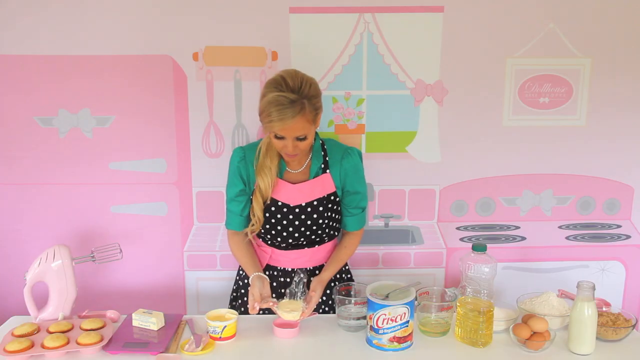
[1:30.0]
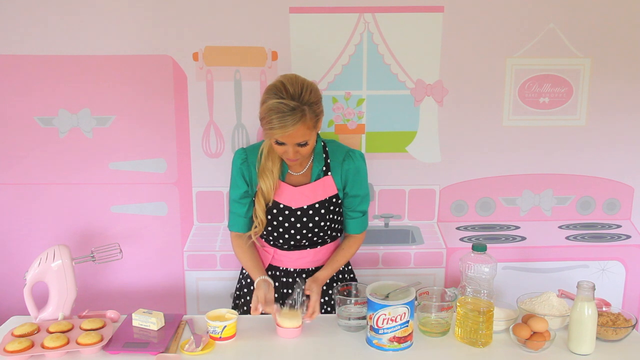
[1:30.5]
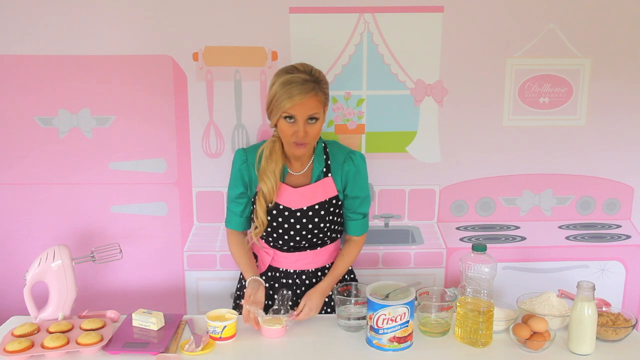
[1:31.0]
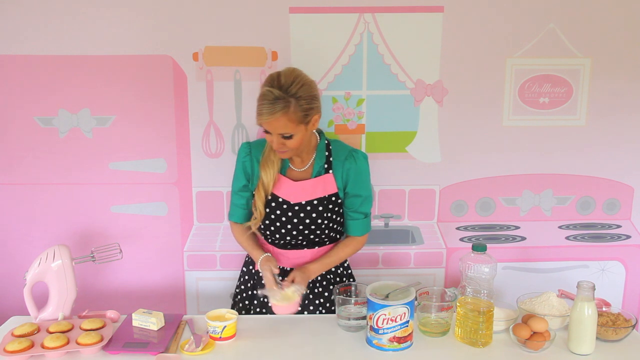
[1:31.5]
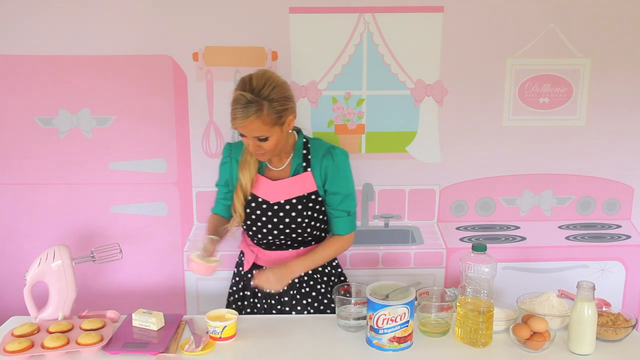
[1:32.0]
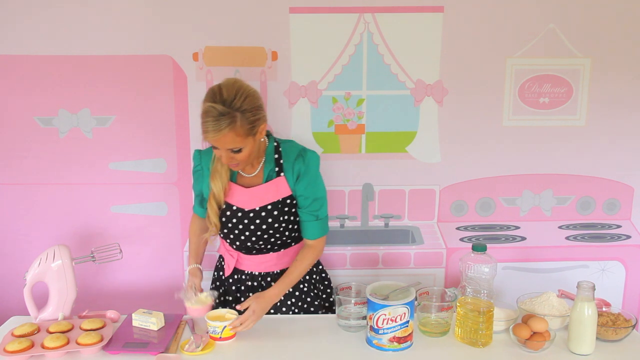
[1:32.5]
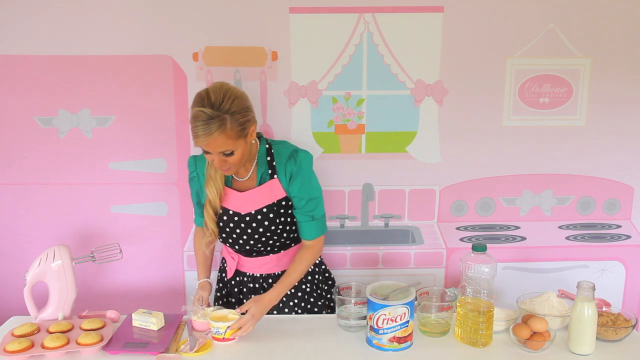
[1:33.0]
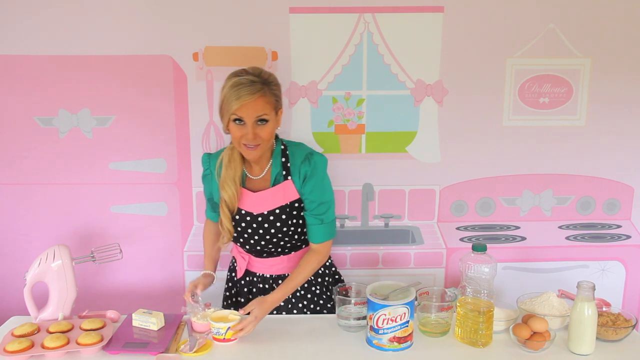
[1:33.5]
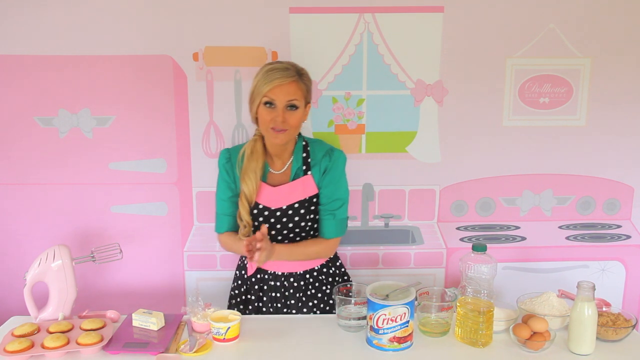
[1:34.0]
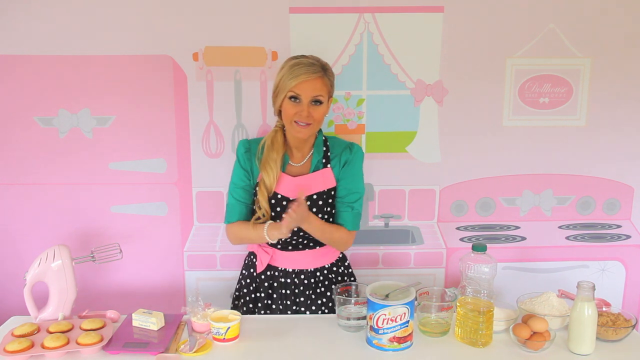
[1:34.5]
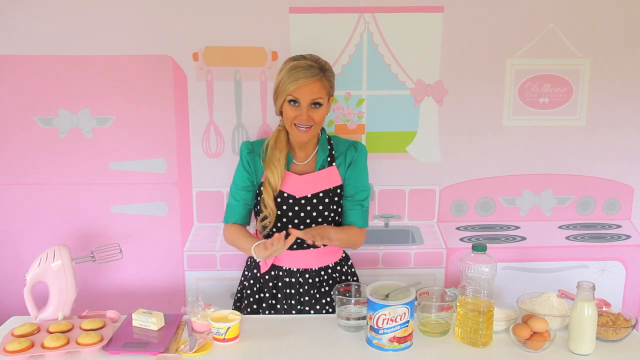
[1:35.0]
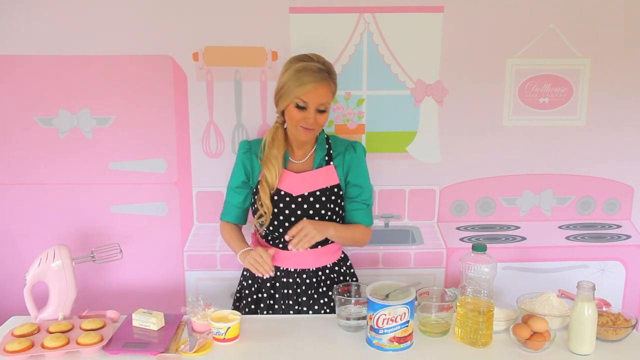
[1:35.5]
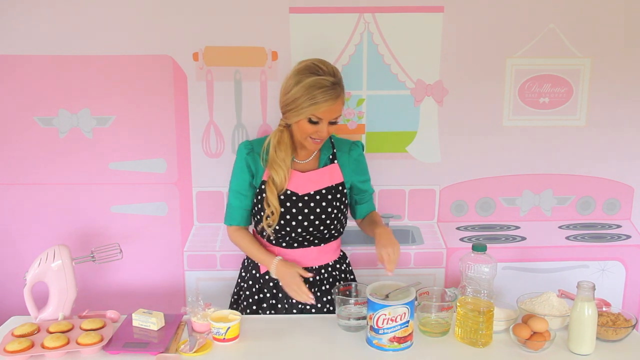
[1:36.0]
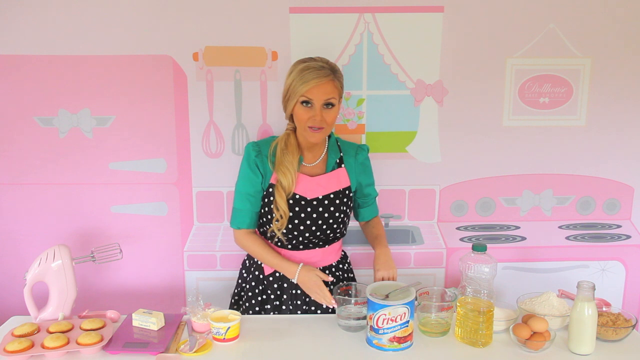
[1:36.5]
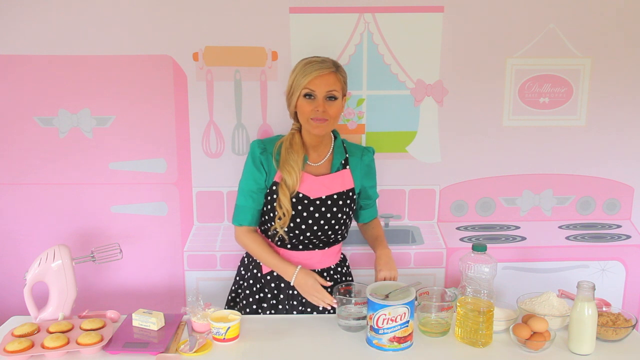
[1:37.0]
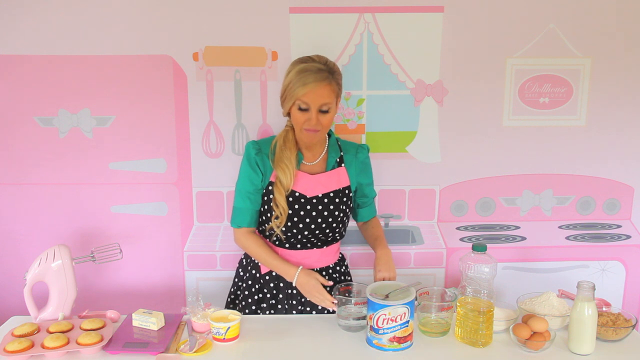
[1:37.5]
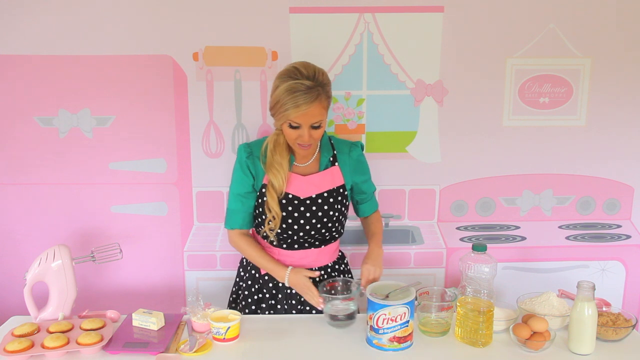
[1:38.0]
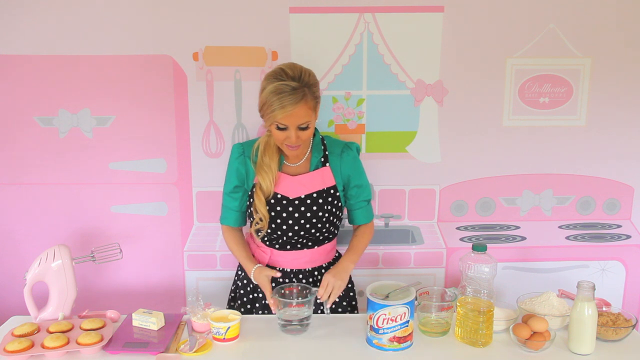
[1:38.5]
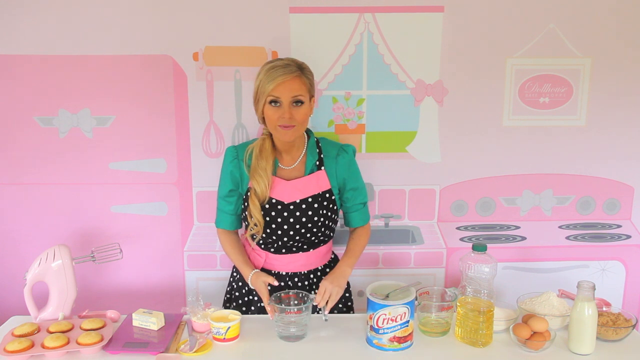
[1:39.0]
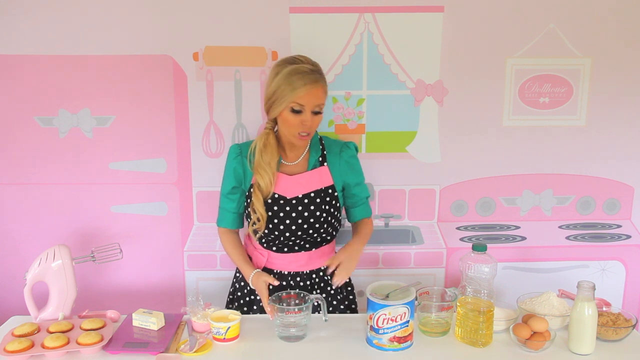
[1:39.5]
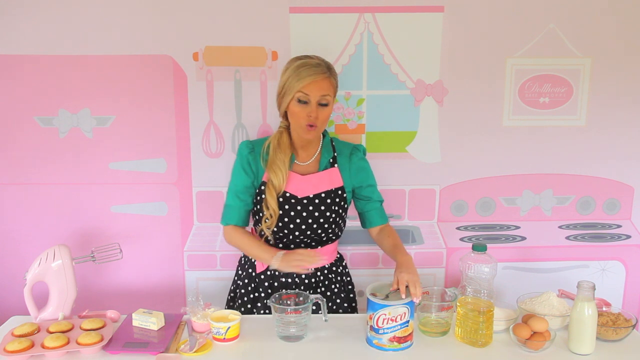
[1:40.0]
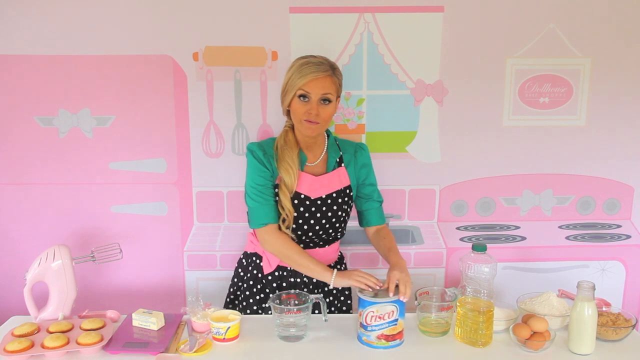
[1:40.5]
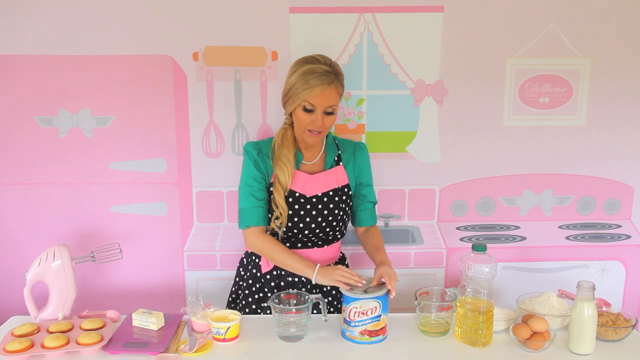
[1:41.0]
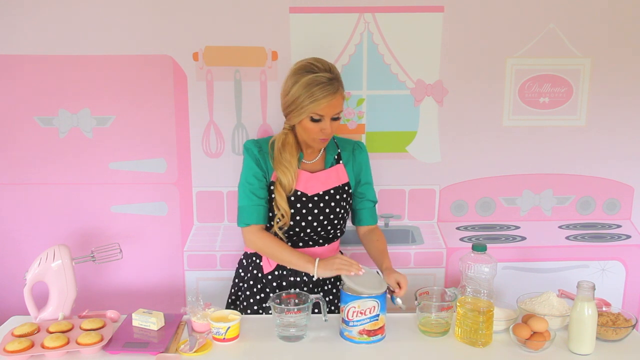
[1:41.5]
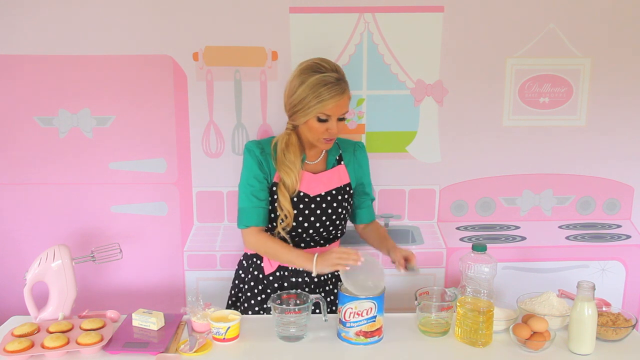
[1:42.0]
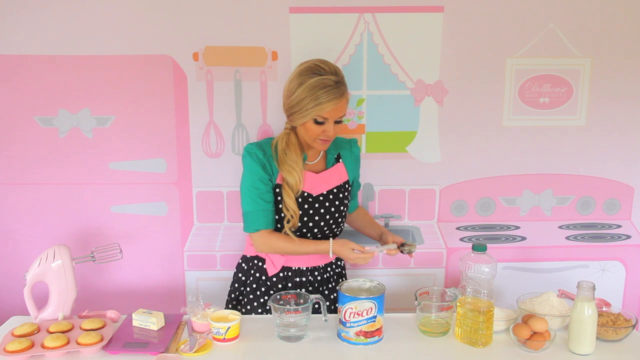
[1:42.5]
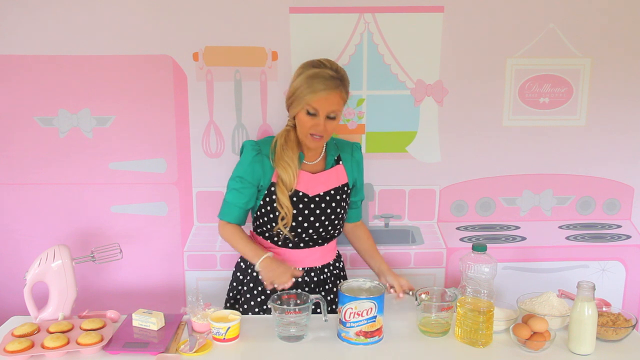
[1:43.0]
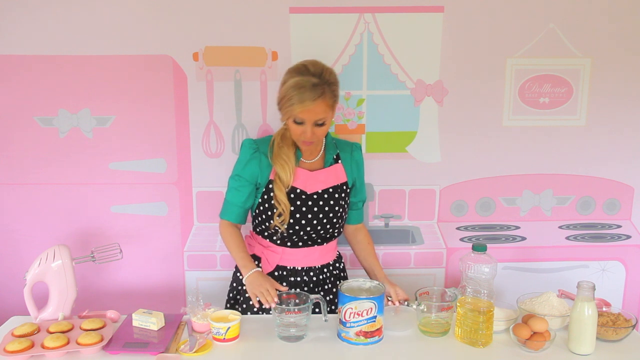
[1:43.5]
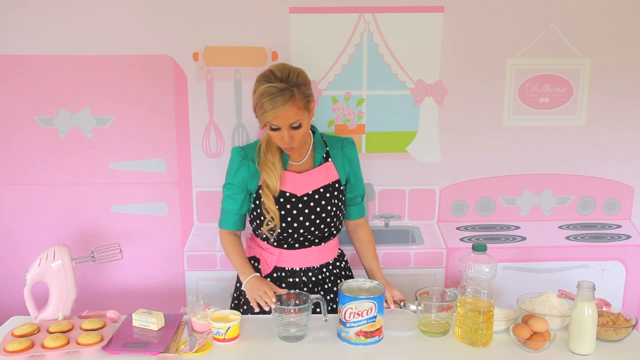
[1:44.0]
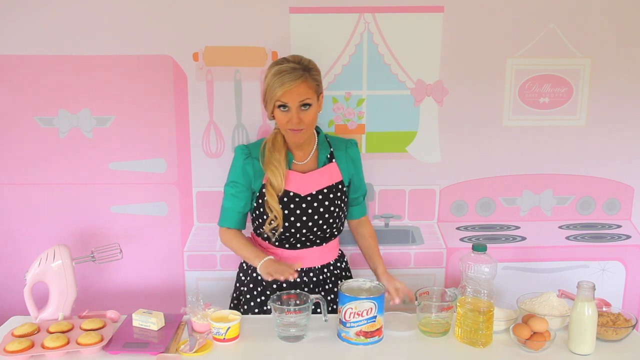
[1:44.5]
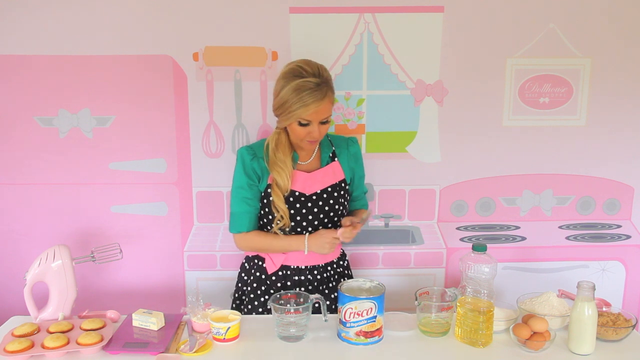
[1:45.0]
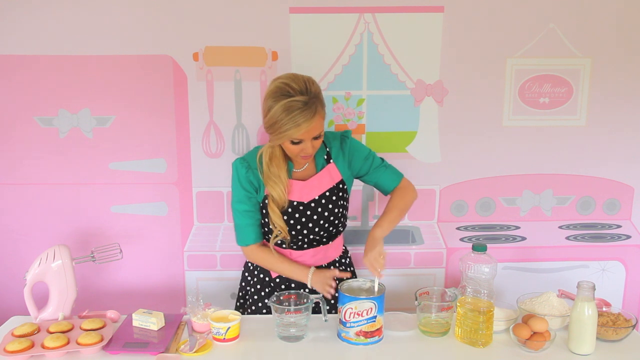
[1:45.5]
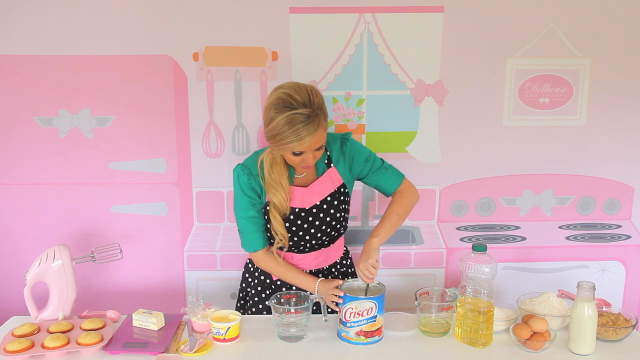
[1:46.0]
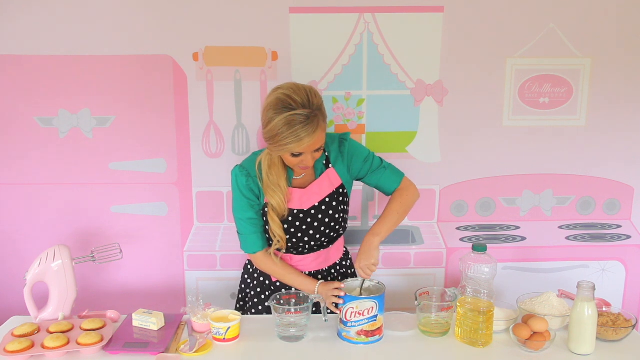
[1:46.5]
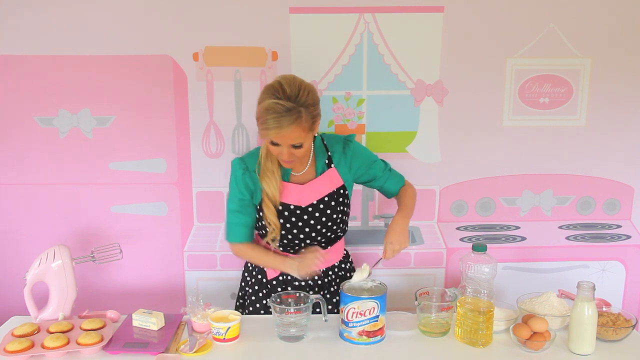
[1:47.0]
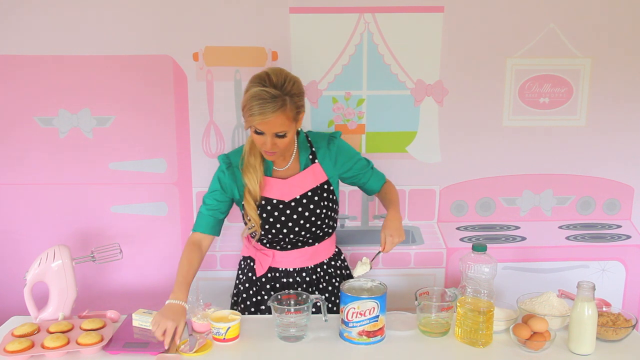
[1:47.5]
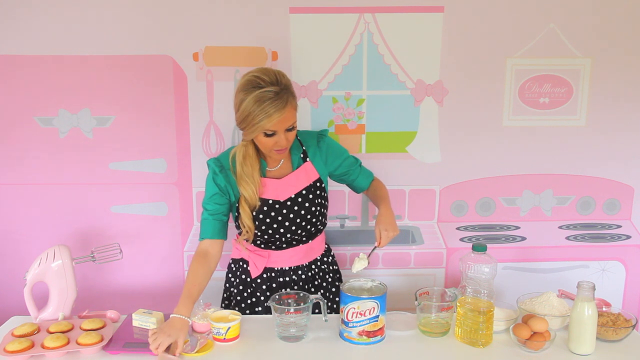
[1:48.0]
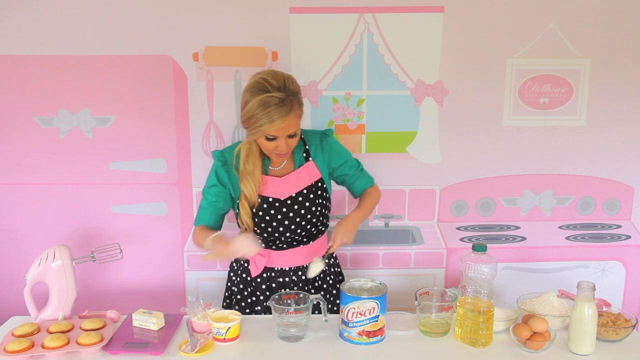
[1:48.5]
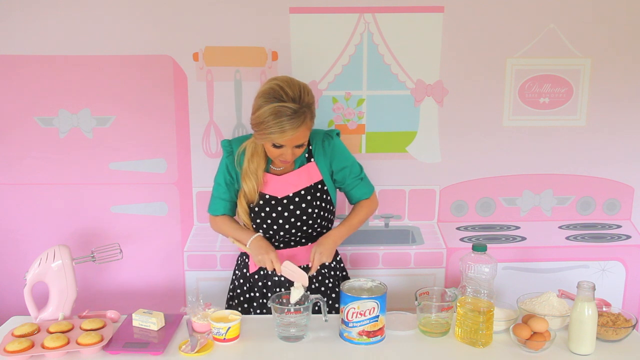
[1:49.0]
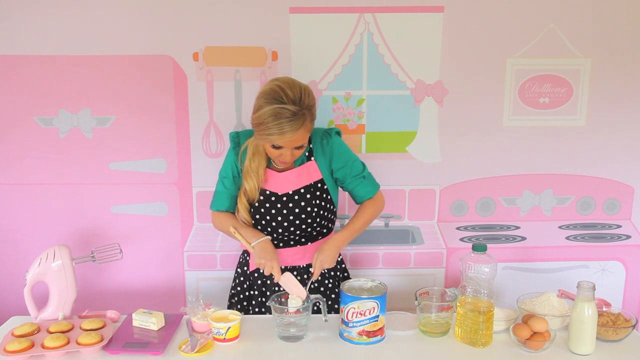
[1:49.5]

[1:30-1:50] She fiddles with the butter and places it next to the yellow container. She then drags the glass water jug from her right-hand side into the middle and explains something. She grabs the blue tin with "Crisco" written on the outside in red writing and seems to scoop some of what appears to be white cream into the jug, which seems to contain water. The product is white, and she holds the tin in her left hand while scooping with her right.